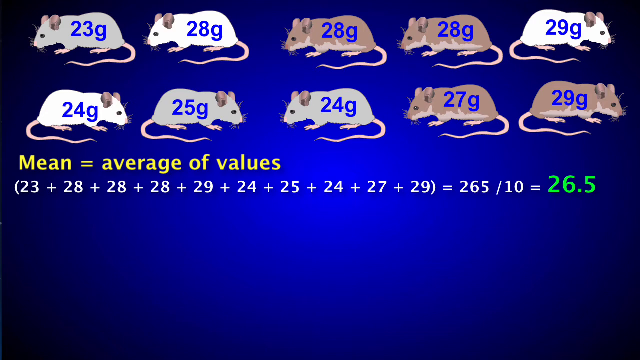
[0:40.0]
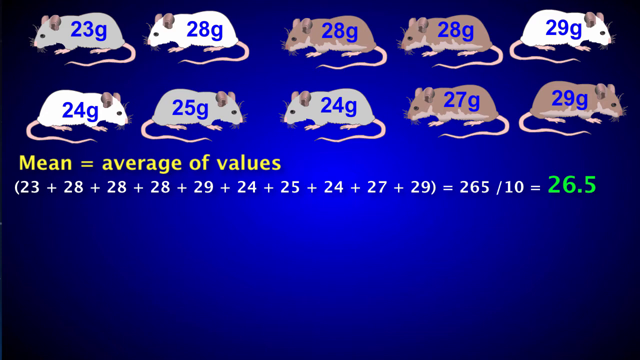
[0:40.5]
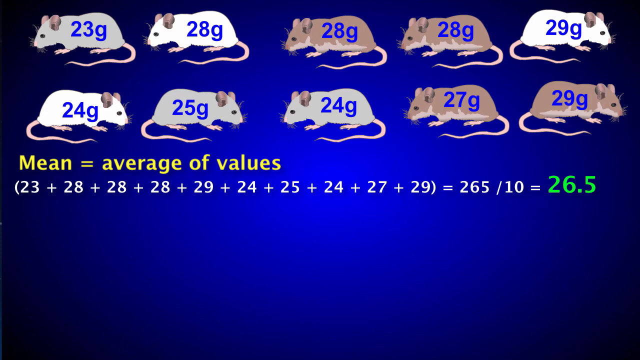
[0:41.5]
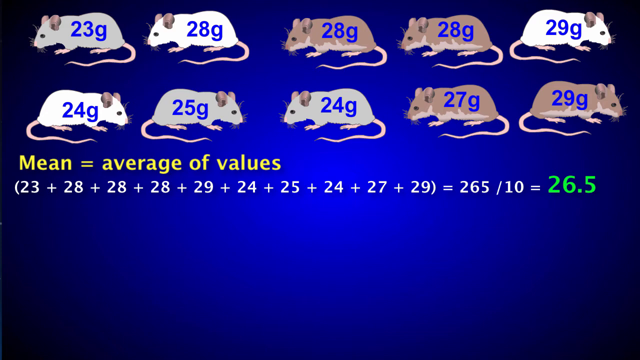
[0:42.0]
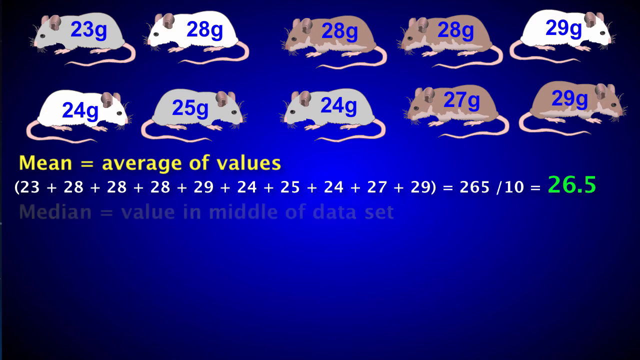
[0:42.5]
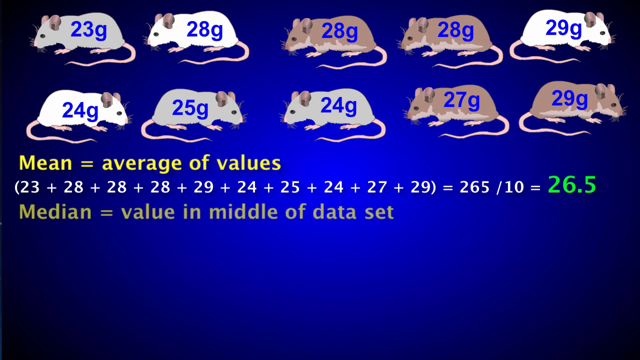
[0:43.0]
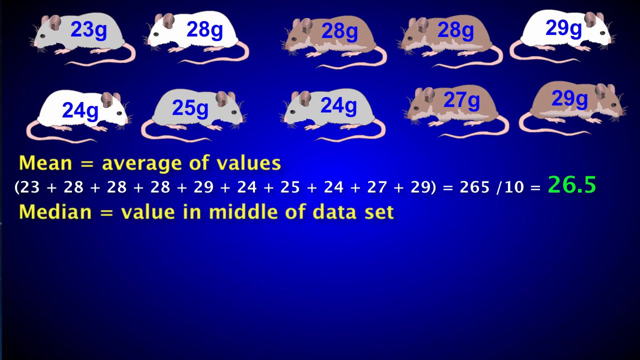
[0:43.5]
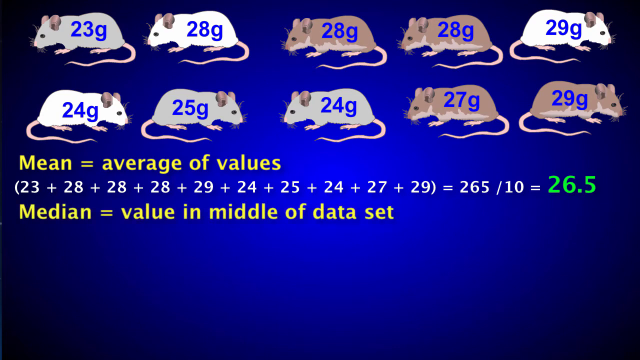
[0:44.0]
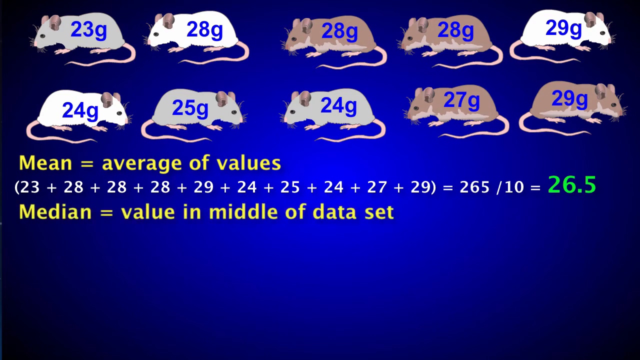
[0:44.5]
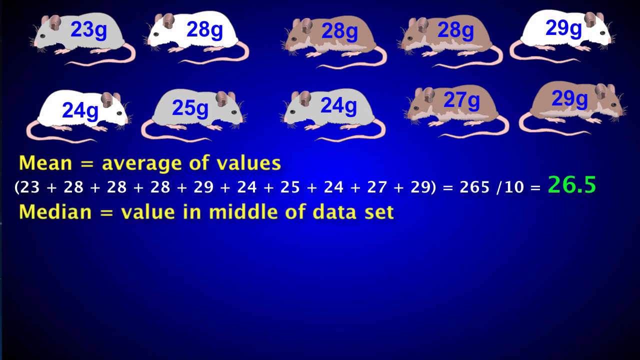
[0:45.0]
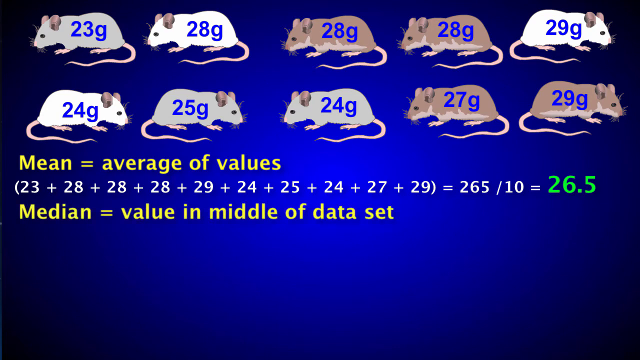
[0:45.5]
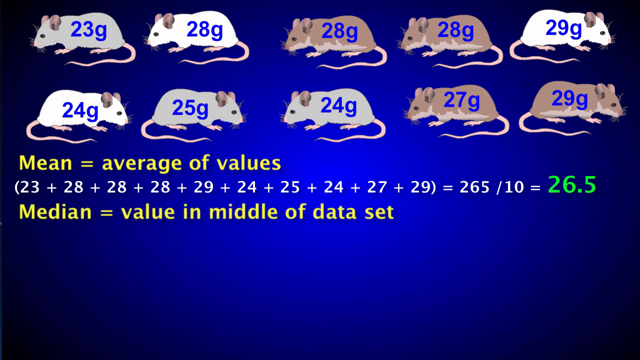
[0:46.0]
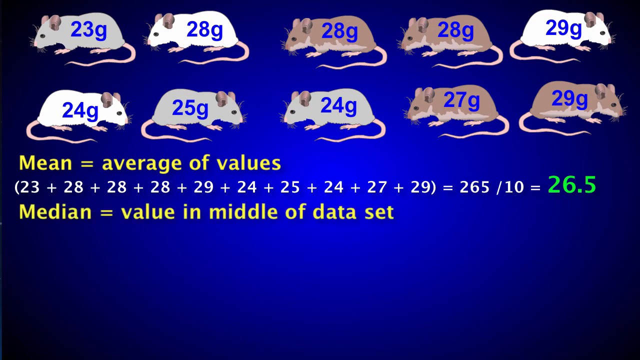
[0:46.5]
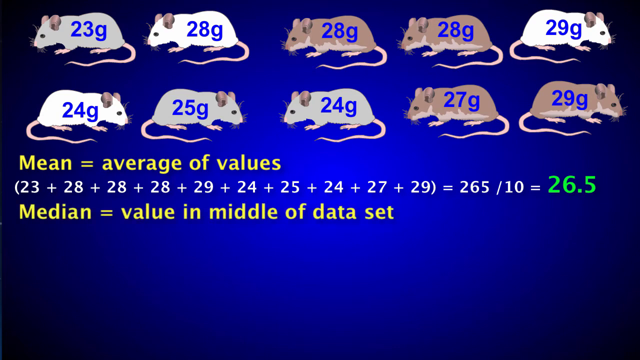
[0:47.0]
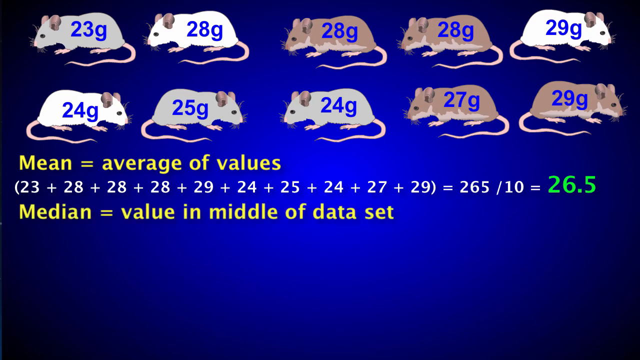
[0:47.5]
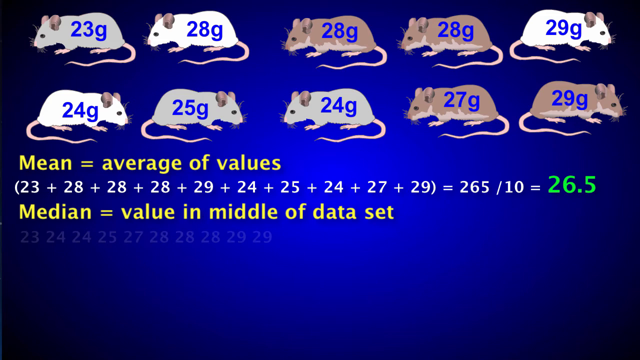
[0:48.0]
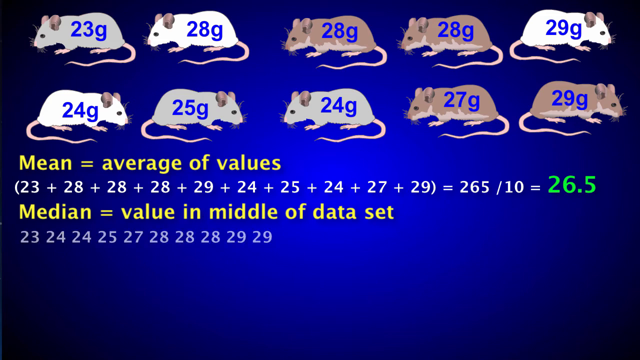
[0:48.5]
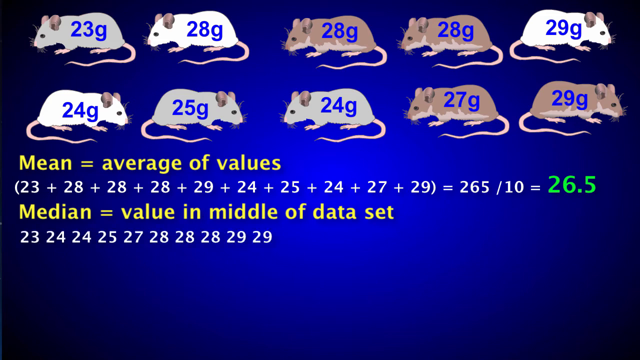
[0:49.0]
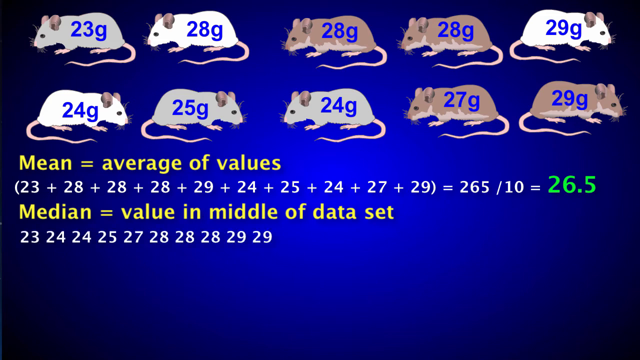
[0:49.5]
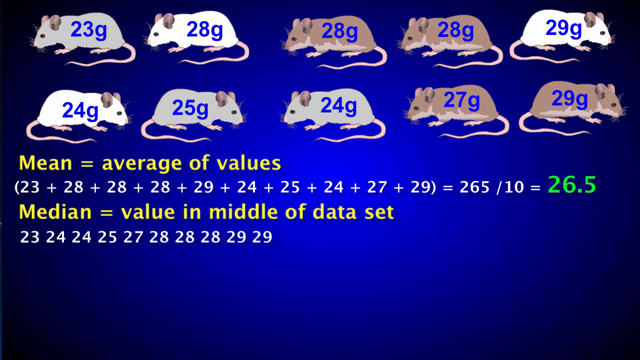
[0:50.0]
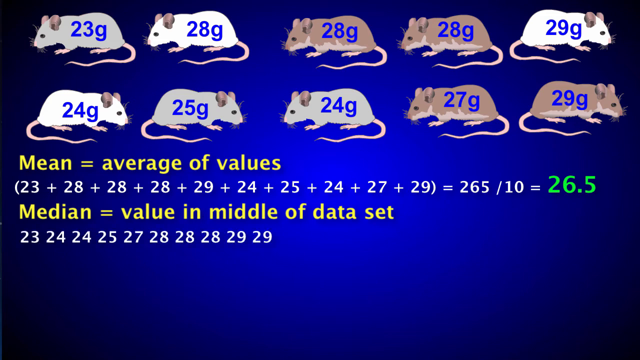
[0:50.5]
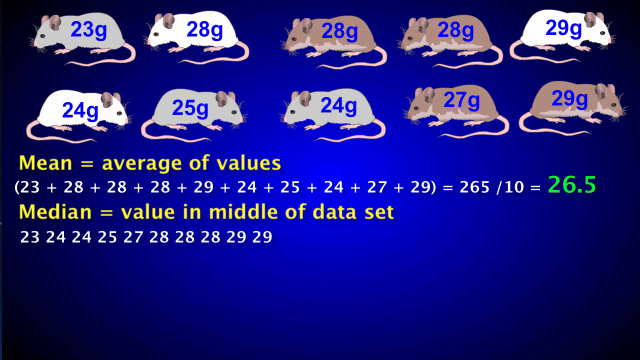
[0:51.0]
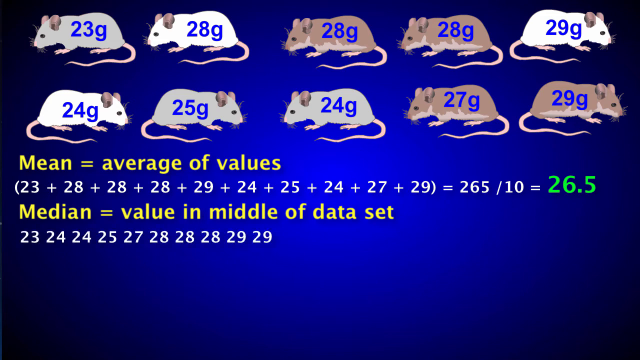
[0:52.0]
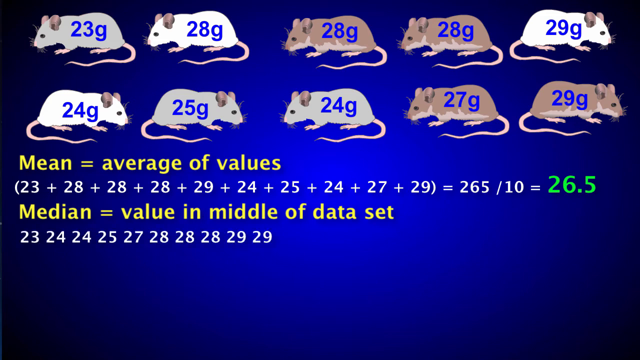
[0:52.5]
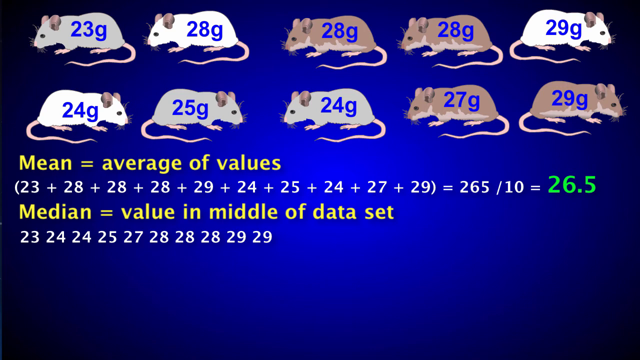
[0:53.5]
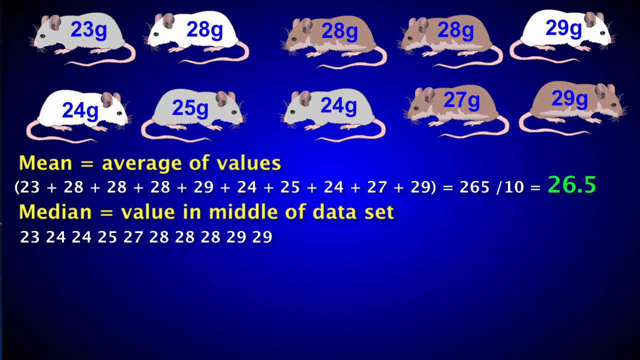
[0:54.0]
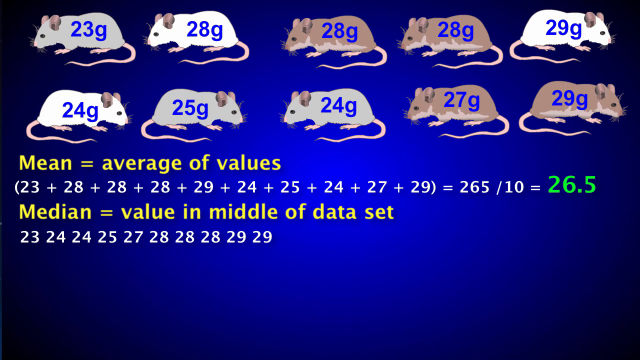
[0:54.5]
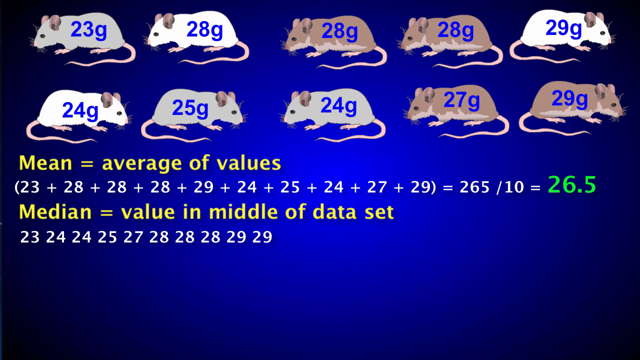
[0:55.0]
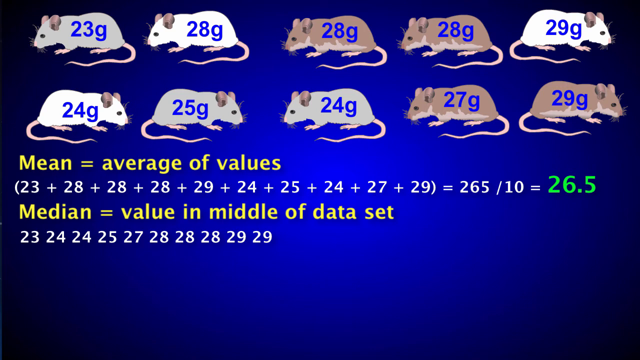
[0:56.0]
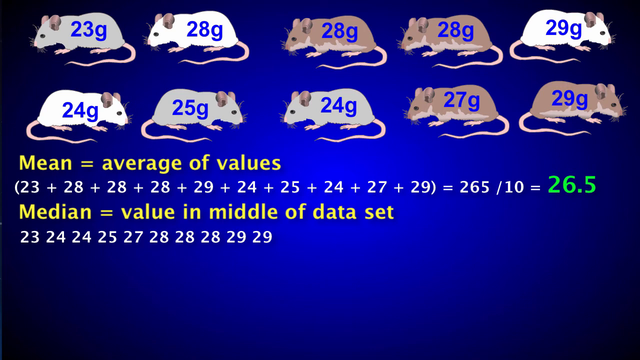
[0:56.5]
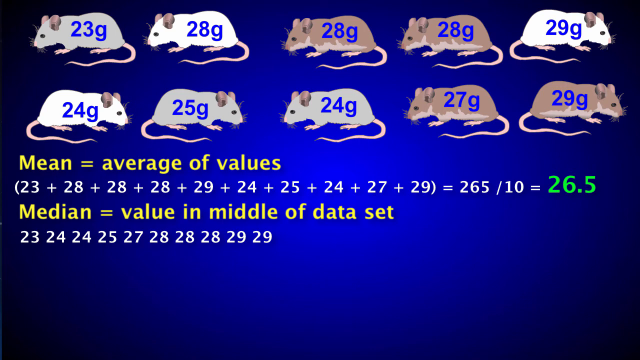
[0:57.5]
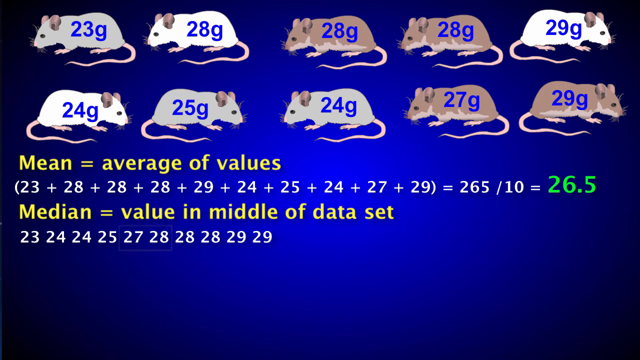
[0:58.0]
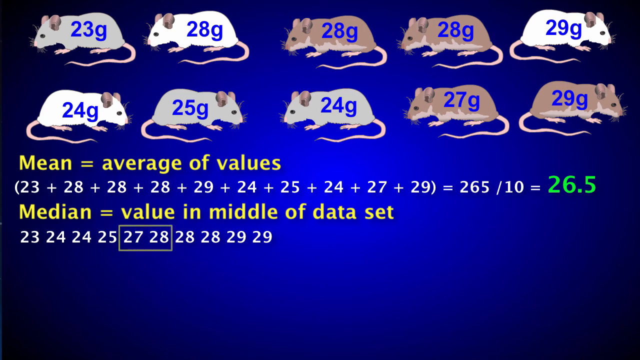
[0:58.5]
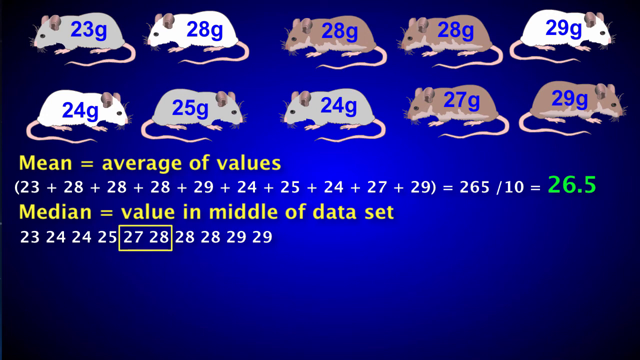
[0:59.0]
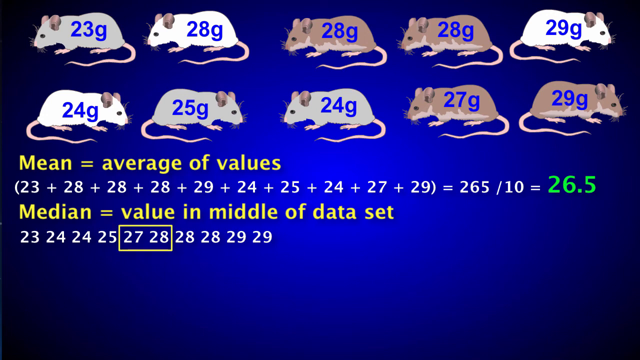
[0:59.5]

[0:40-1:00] The mean is shown as the average of values, with the 10 mice and their different gram values giving 26½. The numbers added together are 23, 28, 28, 28, 29, 24, 25, 24, 27 and 29, and the total is divided by 10 to give the answer. The video then moves on to the median, the value in the middle of the data set, with the numbers lined up from lowest to highest, including repeats: 23, 24, 24, 25, 27, 28, 28, 28, 29, 29. Since the middle can sometimes be two numbers, a box is shown around 27 and 28.